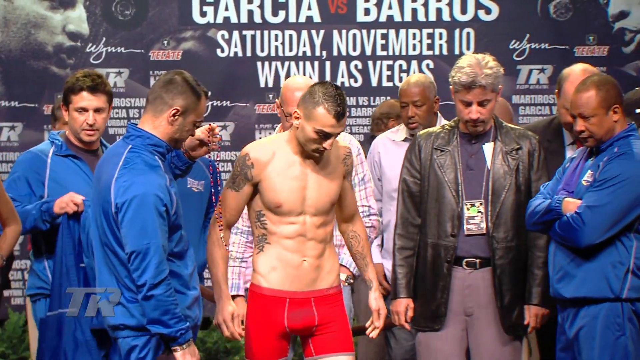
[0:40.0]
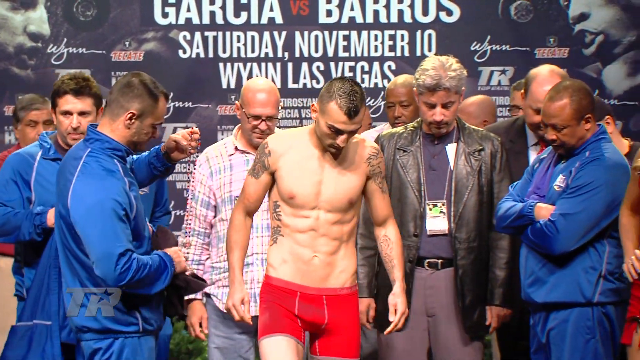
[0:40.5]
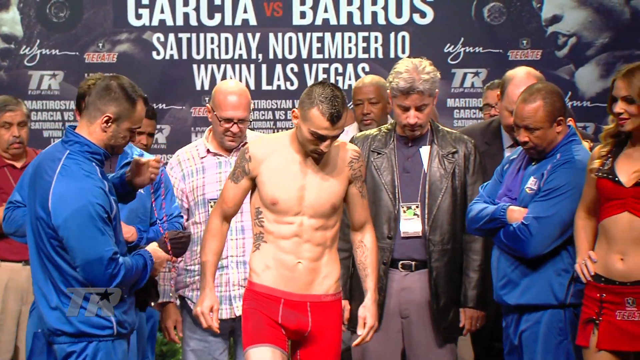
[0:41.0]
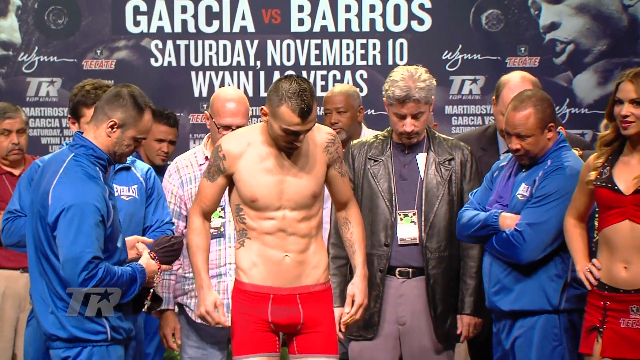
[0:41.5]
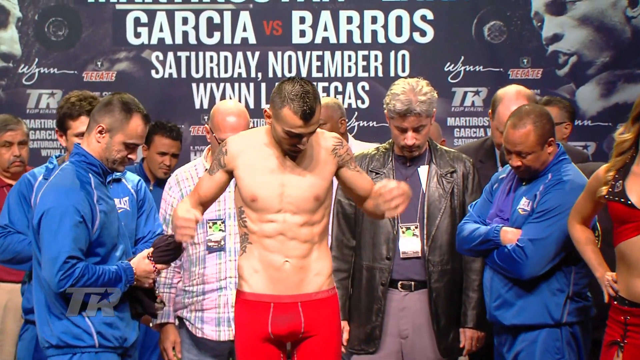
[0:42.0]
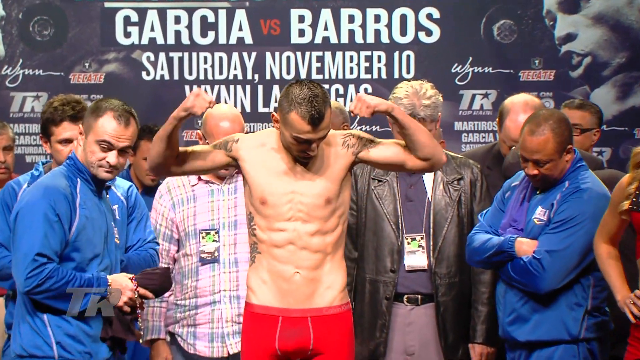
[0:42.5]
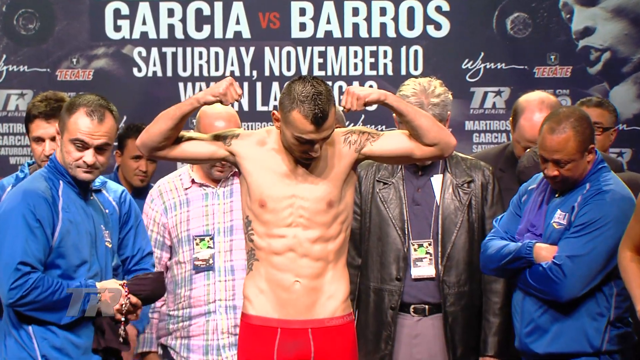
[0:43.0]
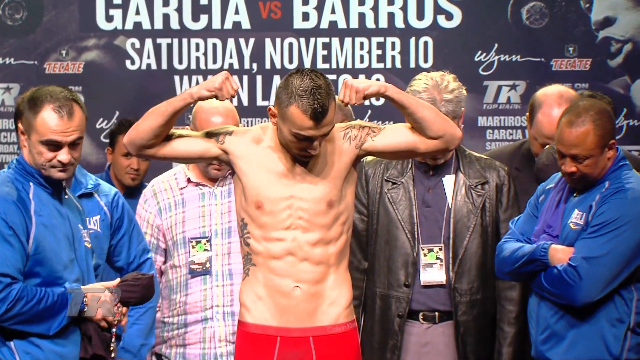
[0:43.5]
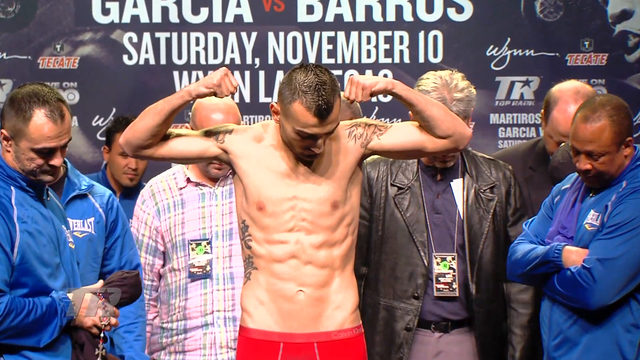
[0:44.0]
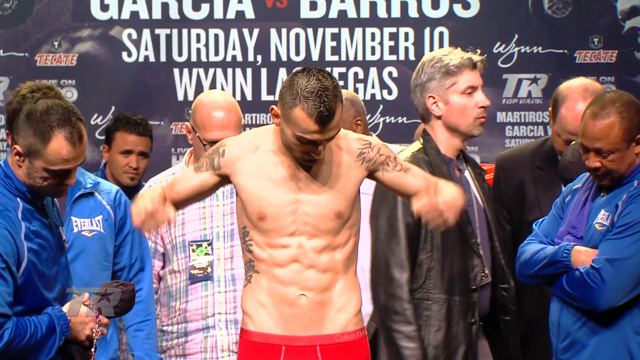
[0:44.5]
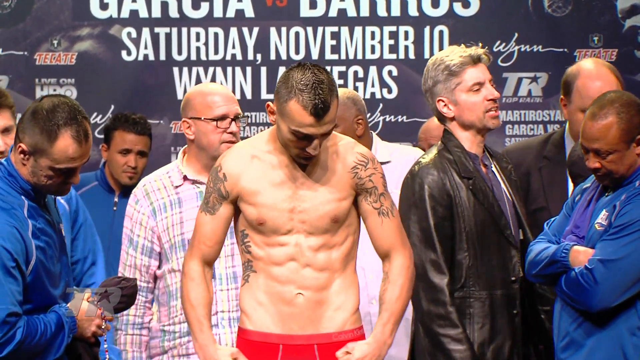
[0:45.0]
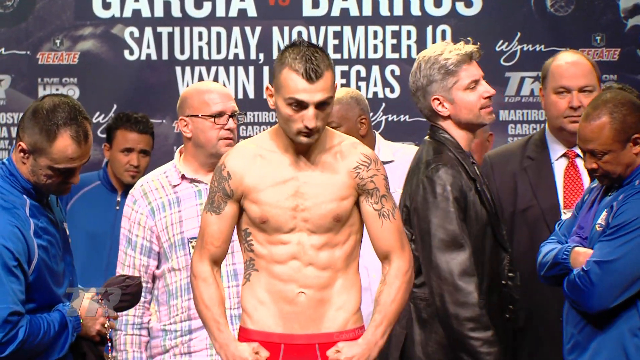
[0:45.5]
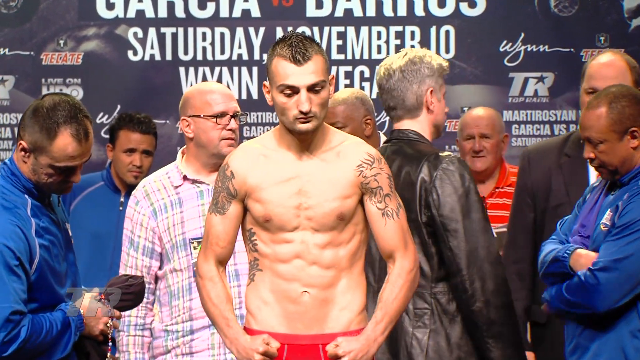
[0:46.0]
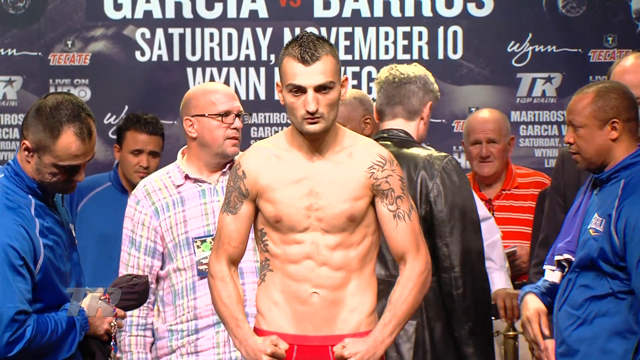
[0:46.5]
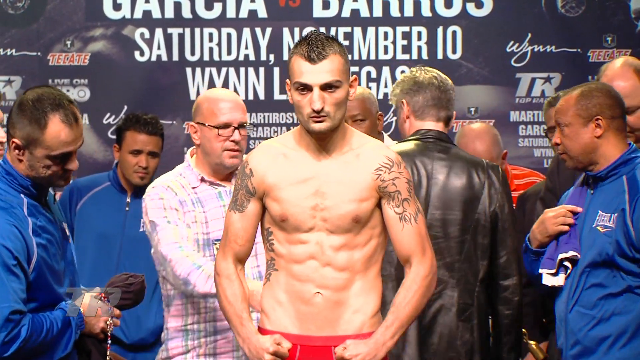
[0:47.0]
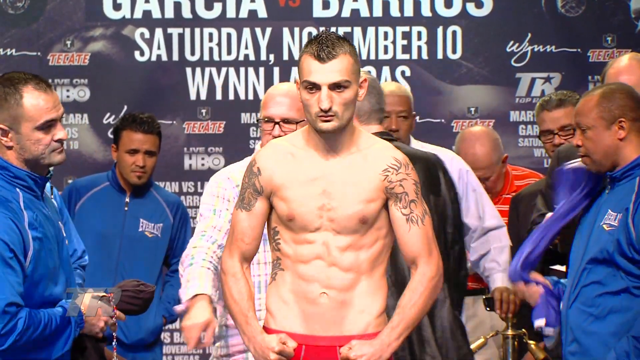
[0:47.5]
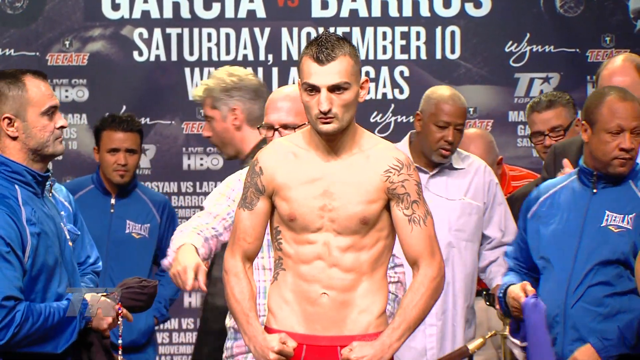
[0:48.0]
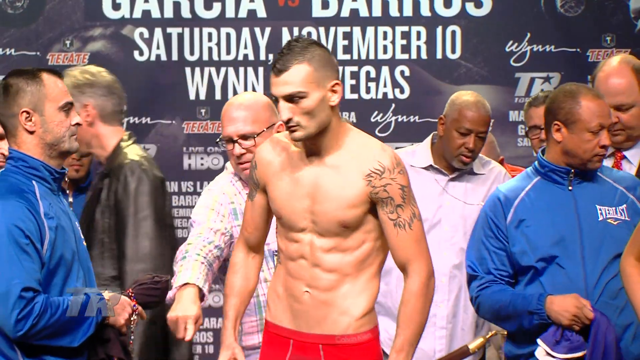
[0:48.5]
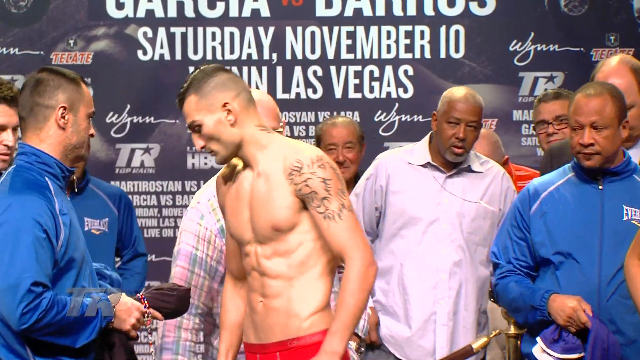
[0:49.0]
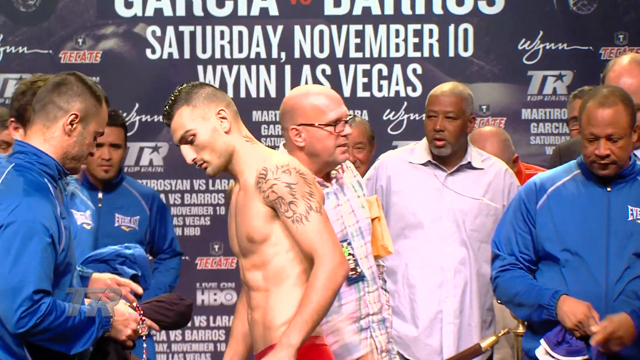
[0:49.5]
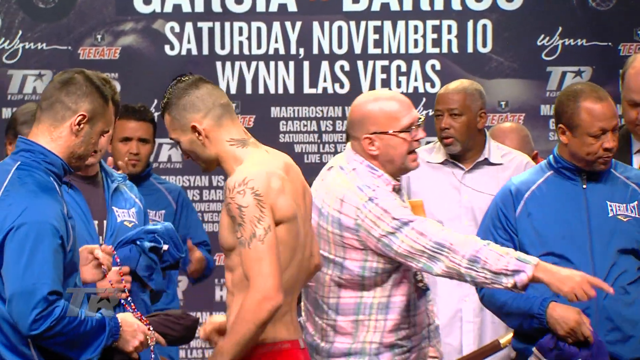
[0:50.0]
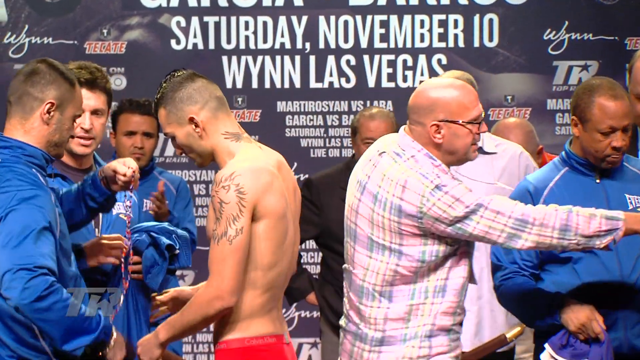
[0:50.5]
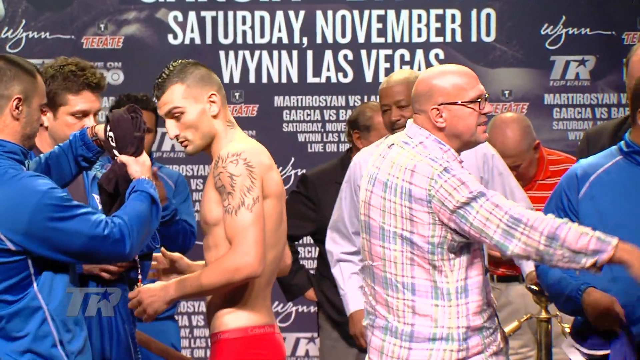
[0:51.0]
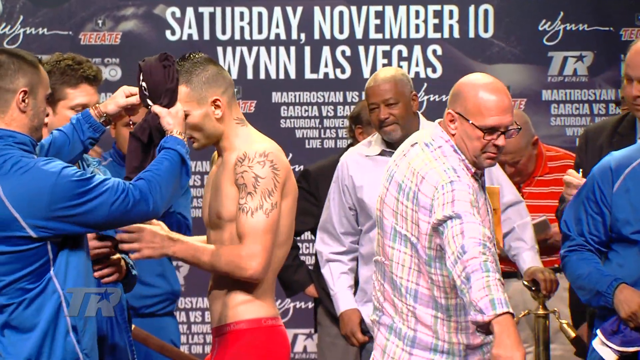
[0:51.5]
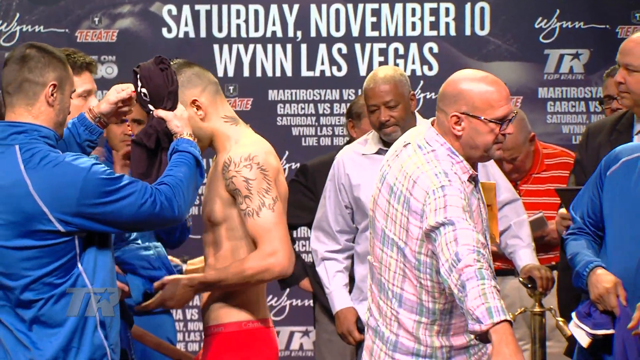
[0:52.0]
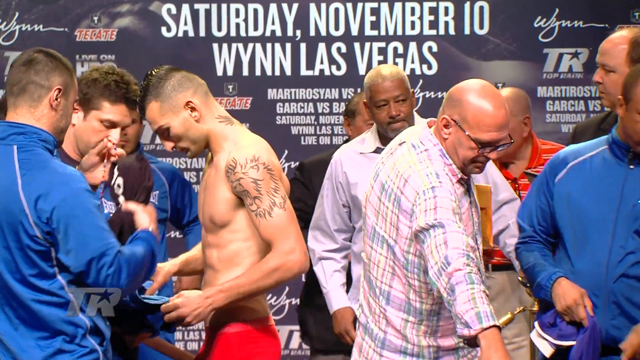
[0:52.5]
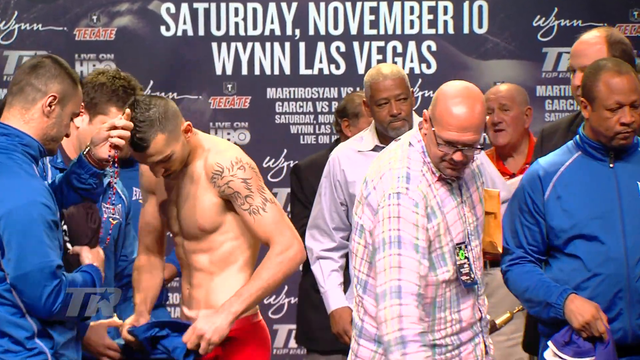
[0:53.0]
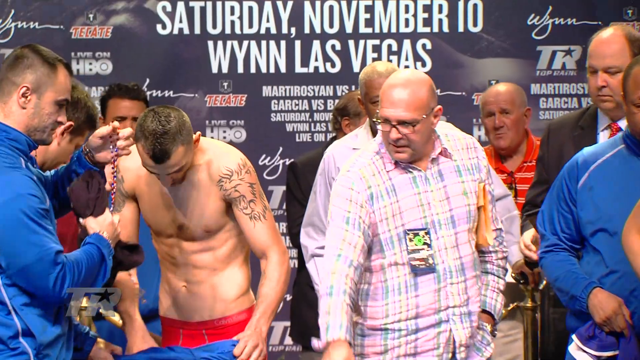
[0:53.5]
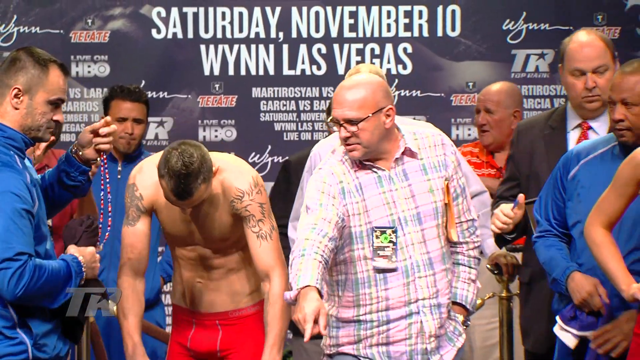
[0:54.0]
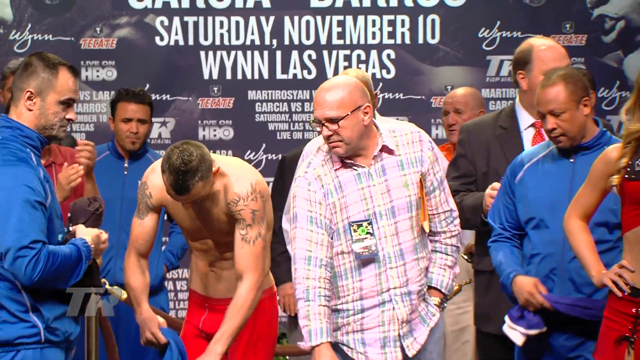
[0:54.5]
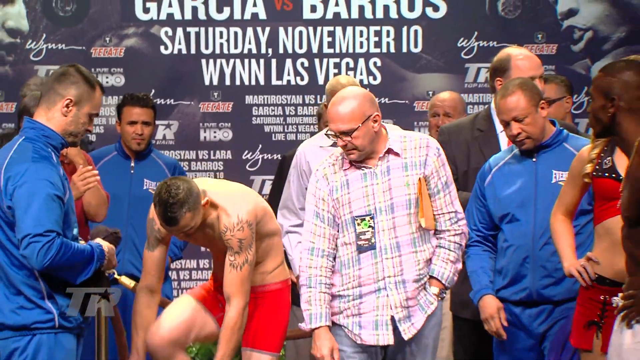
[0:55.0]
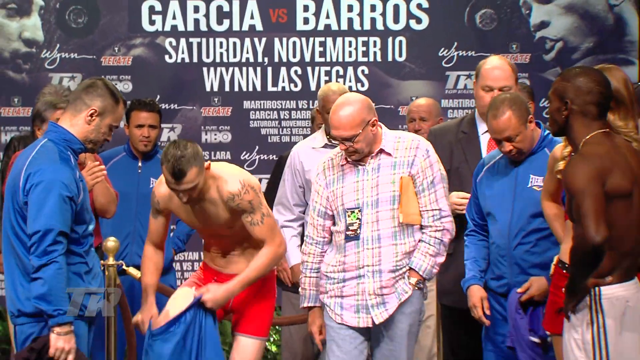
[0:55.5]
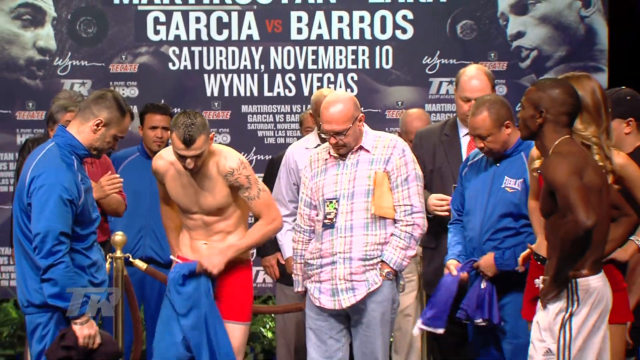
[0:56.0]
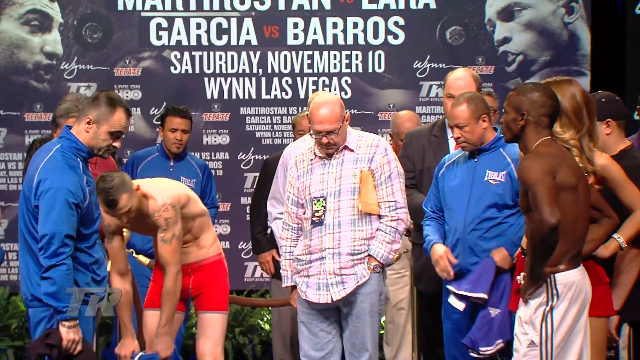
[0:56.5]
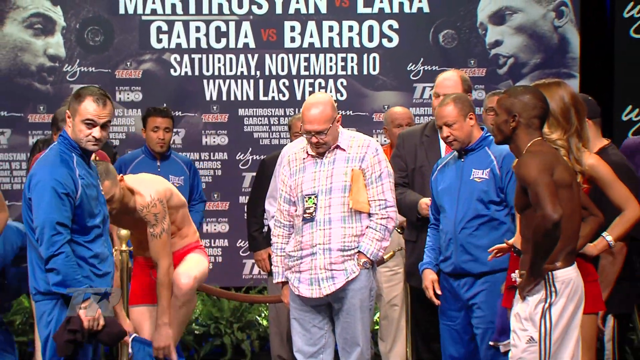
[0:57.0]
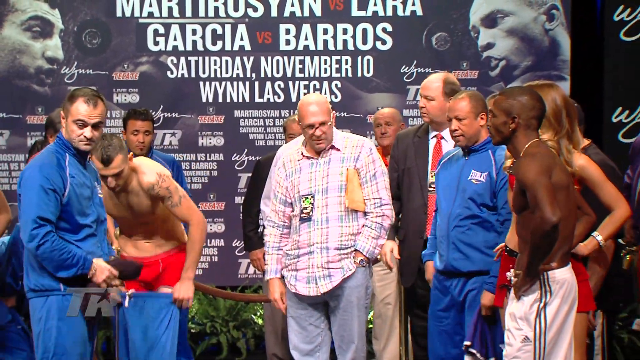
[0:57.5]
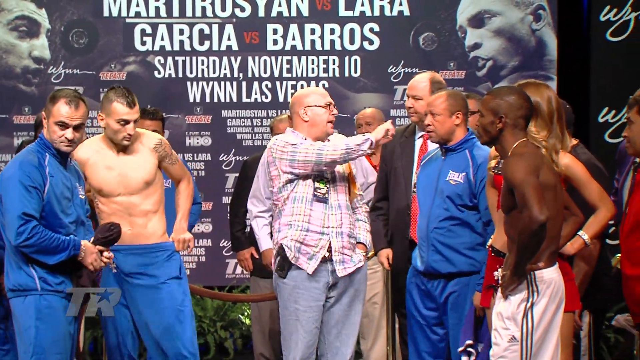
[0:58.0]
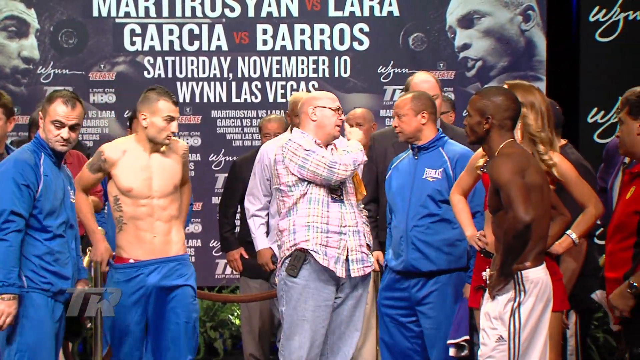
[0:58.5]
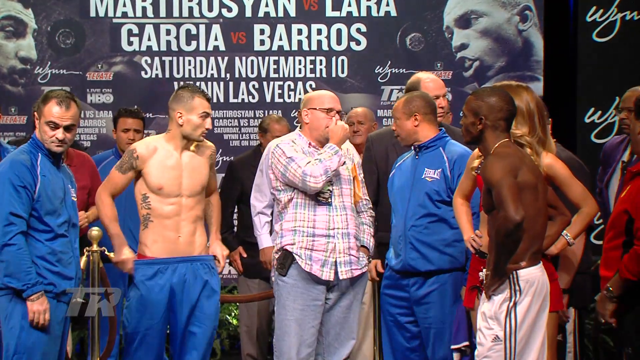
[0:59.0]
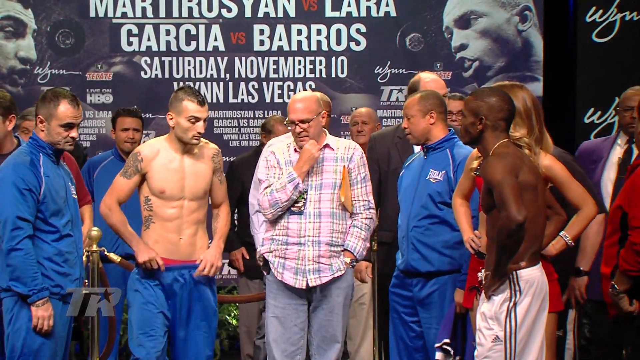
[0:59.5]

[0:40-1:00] The Caucasian fighter gets up and looks down at what he is standing on, maybe a scale, then raises his arms to flex. Both shoulders have tattoos. The left one is dark black and looks like maybe fire, though it is hard to say because the quality is low and the shot is far away. The other looks white or like an outline drawing, maybe an animal with claws. He has a Mohawk-style haircut. He turns around, and the tattoo looks like it might be a porcupine or maybe a griffin, though it is still hard to tell. He is given a blue pair of pants to put on, and another man is holding his necklace. The other fighter has come back with his white pants on. People around him seem to be talking, probably arranging the exhibition photos.